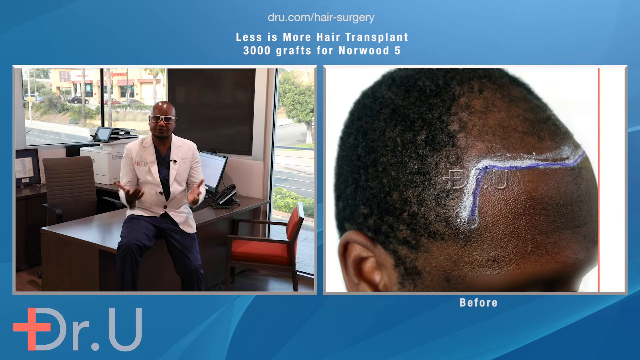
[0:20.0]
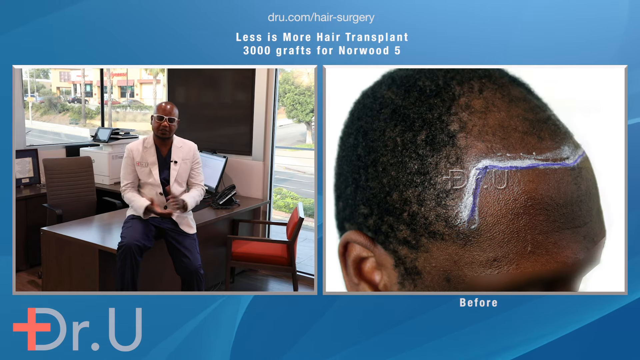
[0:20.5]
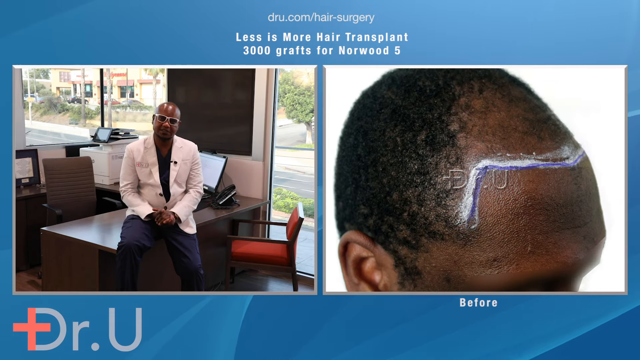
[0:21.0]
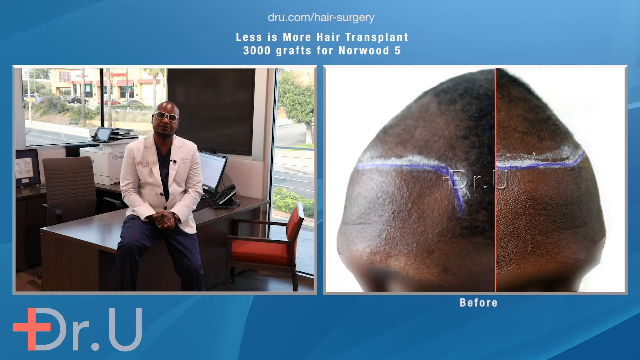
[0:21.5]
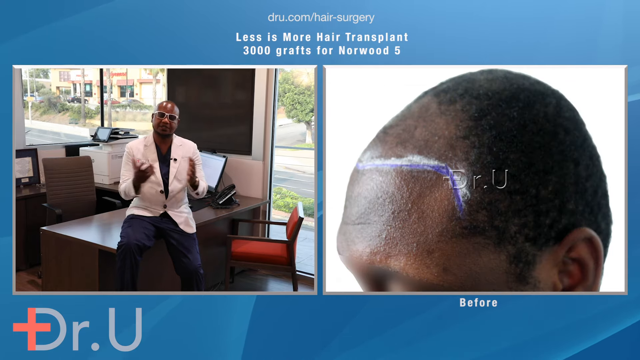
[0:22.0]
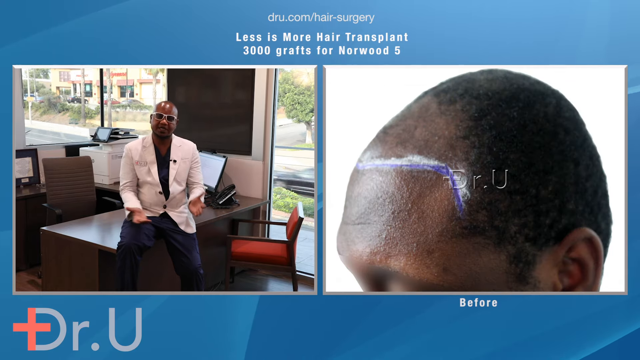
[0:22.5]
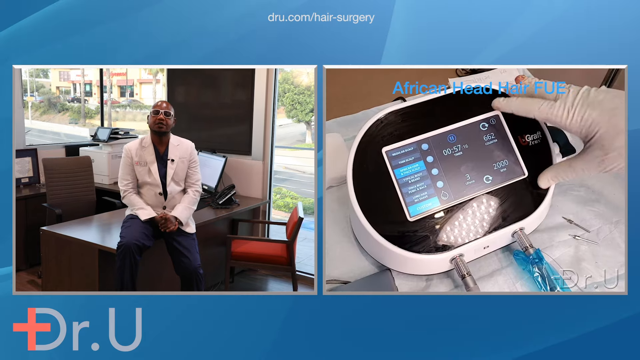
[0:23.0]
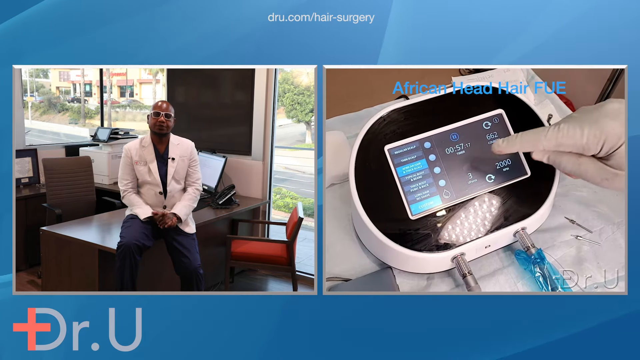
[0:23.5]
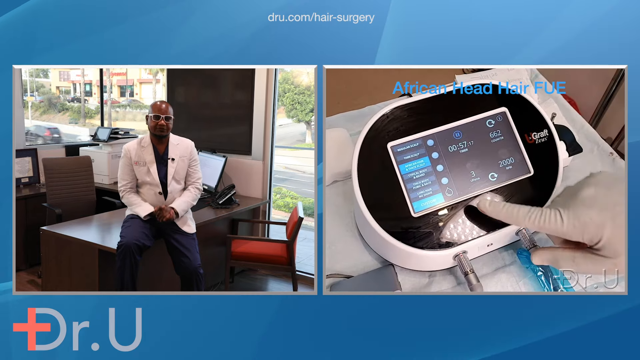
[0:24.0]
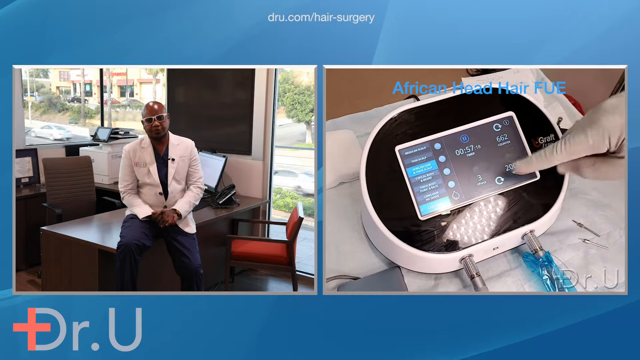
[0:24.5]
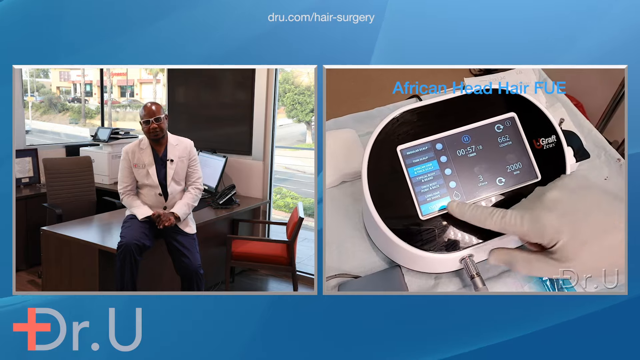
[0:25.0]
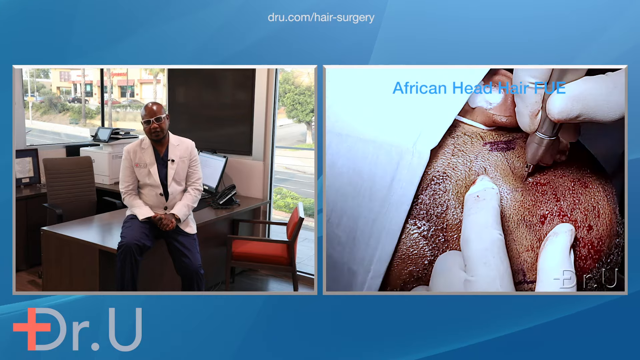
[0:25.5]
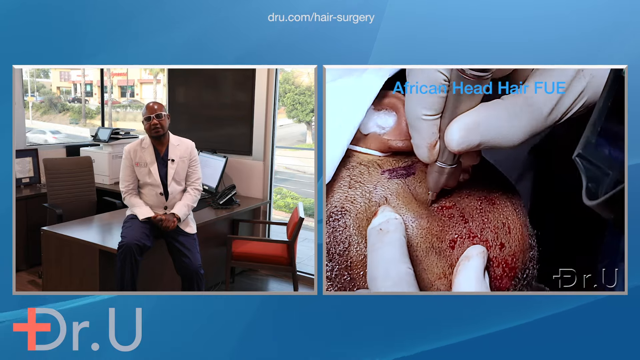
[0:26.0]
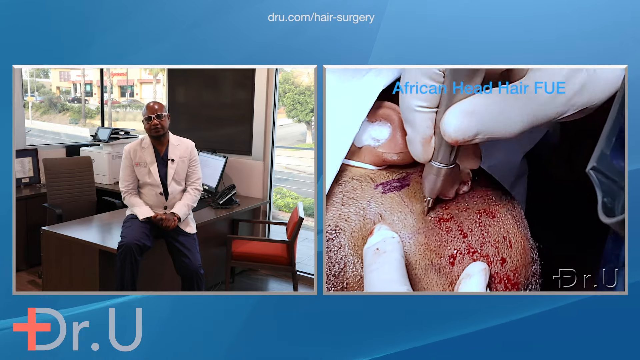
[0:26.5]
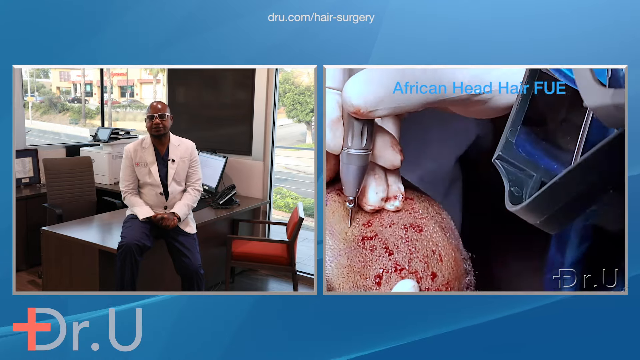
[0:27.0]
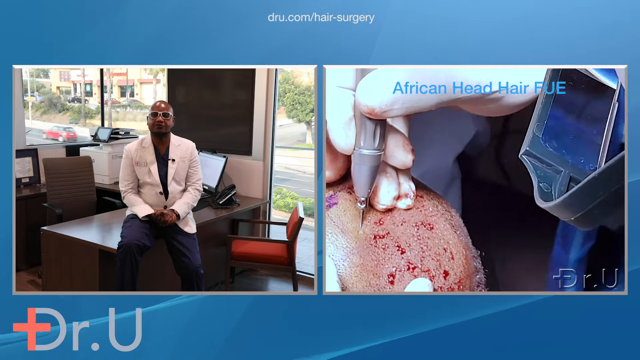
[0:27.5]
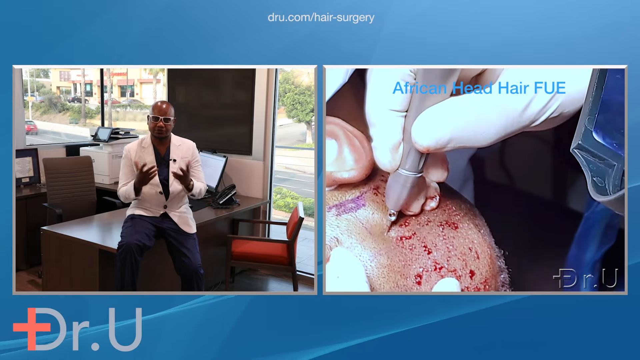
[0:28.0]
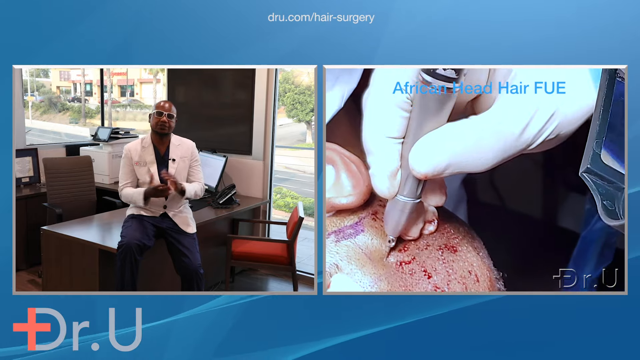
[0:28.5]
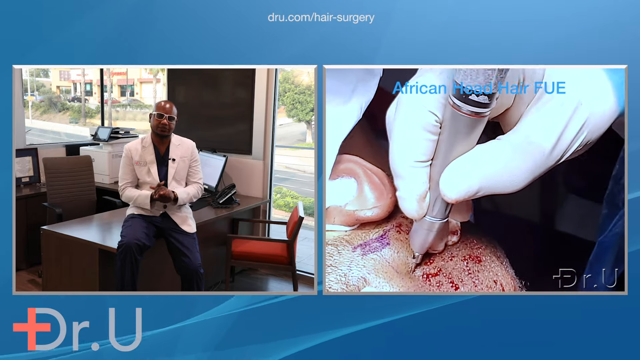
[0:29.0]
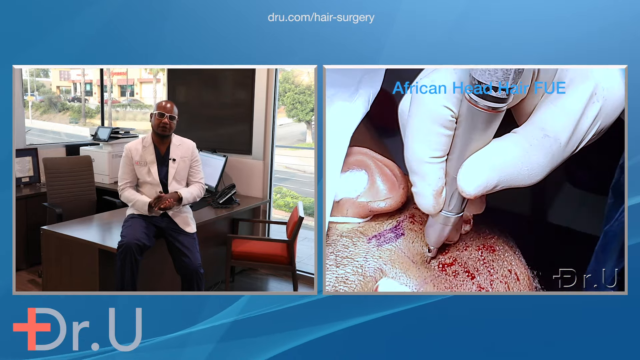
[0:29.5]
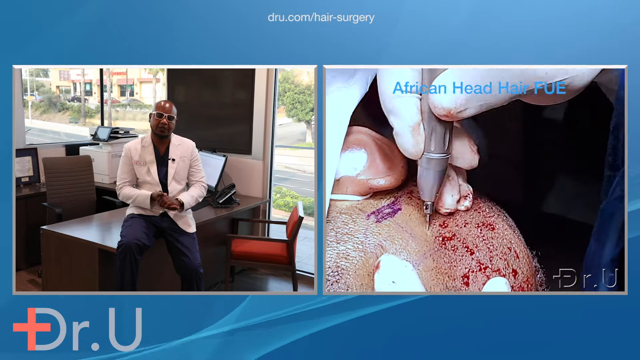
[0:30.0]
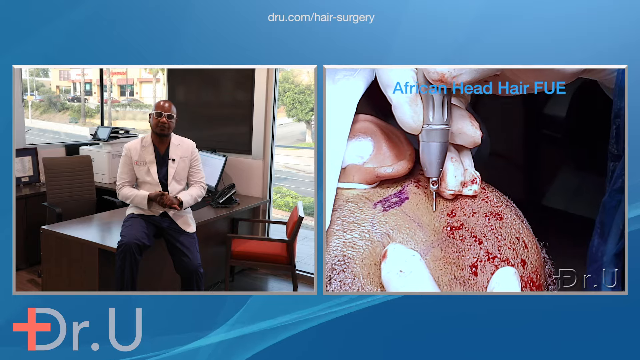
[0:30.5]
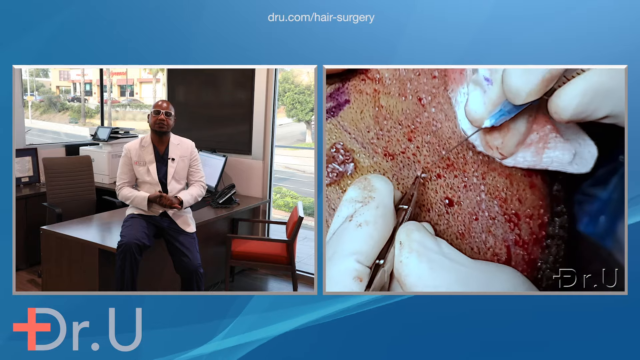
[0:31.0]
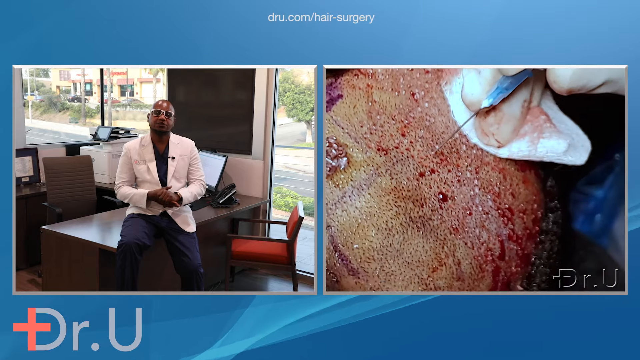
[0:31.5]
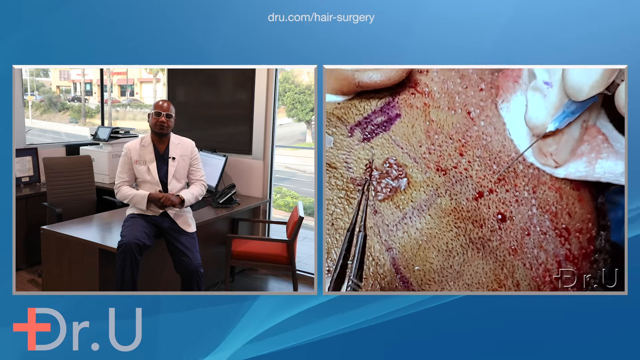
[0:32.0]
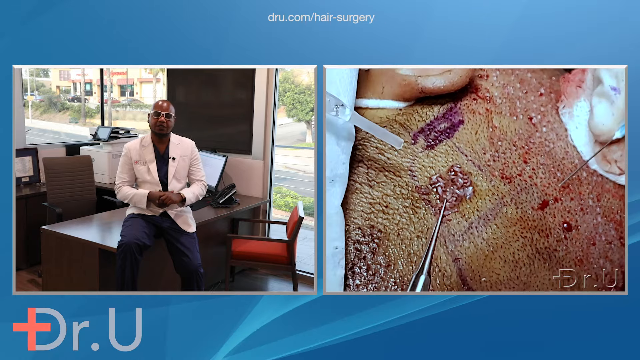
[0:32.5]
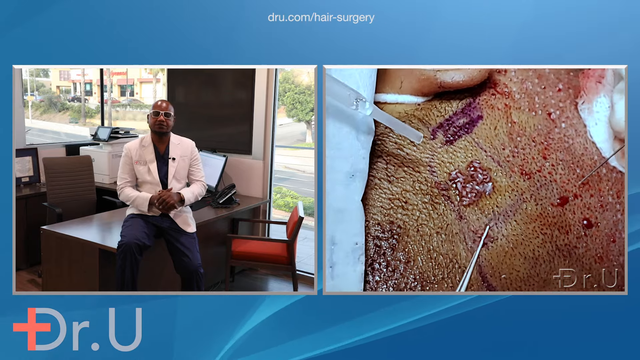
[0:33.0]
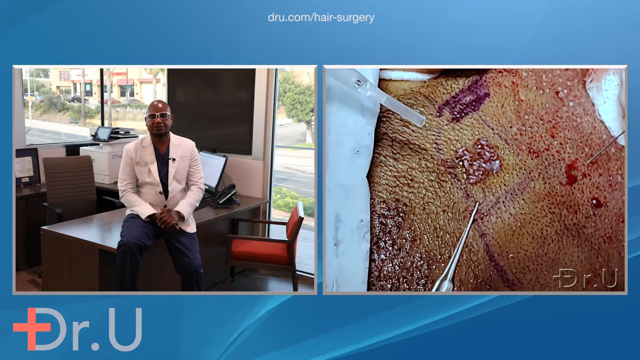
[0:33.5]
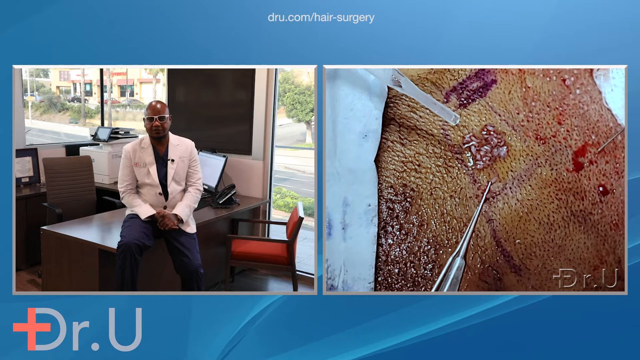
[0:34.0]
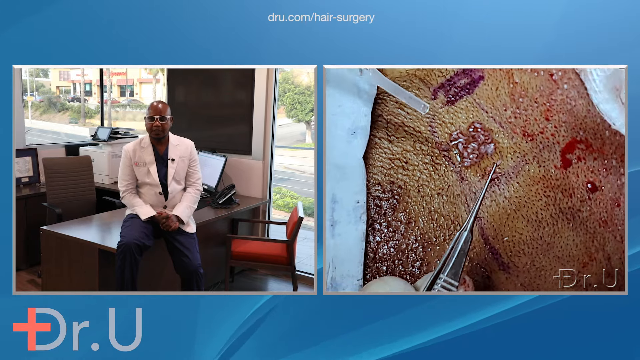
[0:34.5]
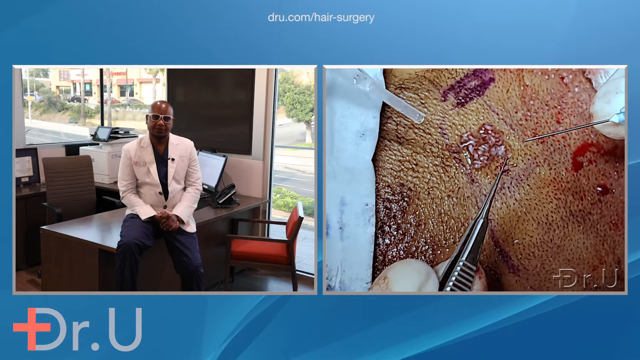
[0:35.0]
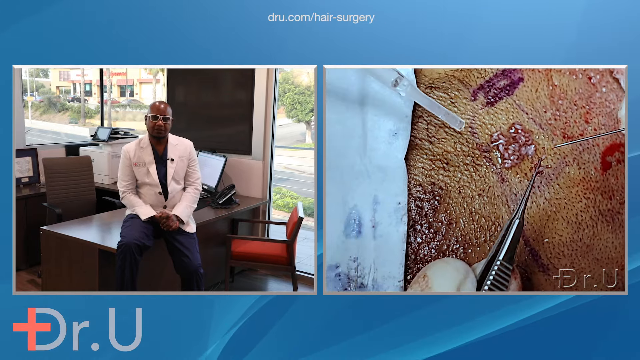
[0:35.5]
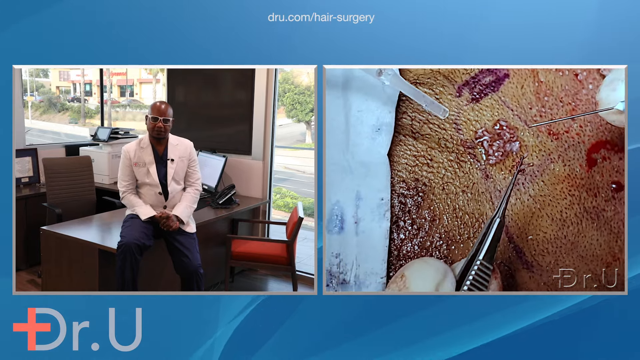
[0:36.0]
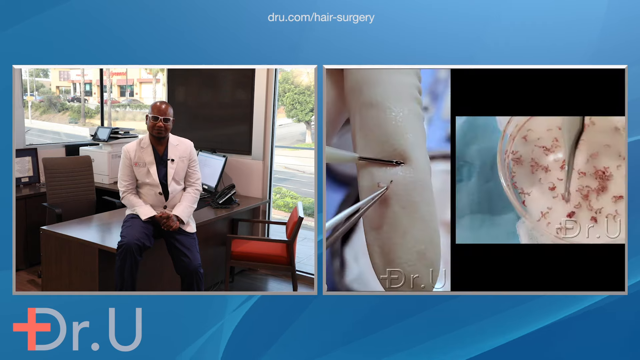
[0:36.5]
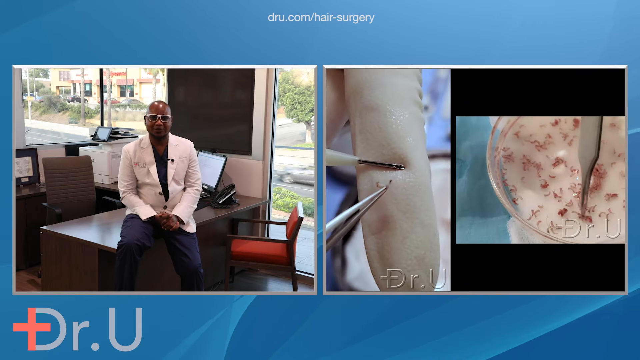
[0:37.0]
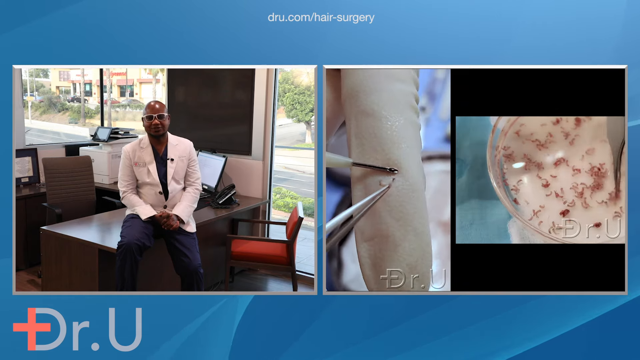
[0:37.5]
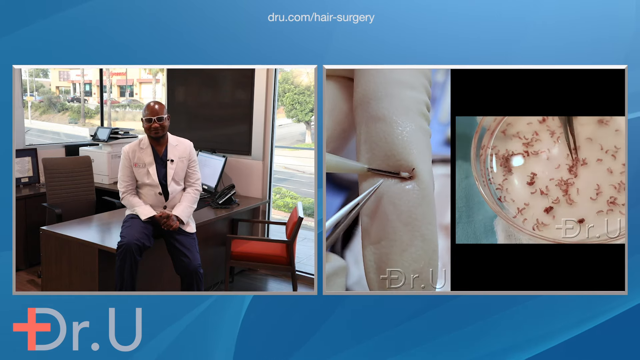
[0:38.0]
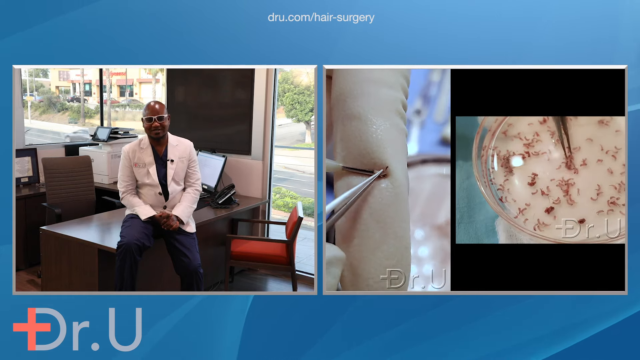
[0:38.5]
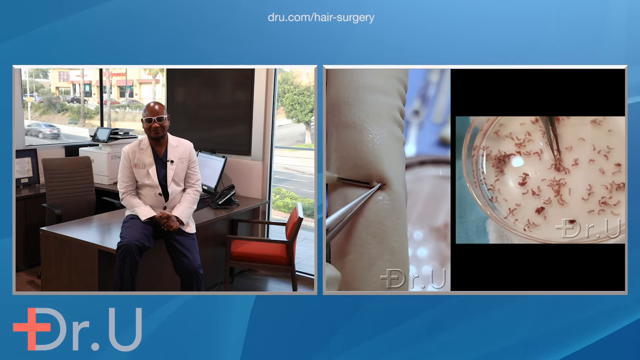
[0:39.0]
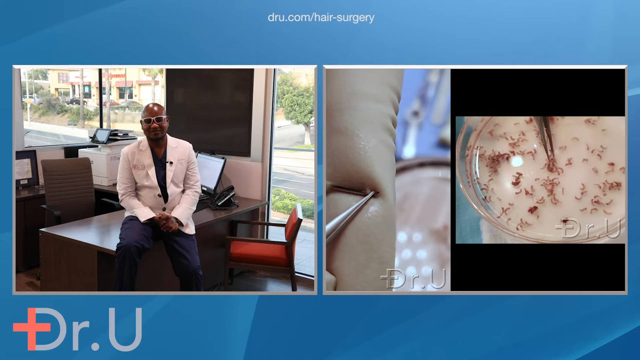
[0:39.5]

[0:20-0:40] A split screen shows two inset videos. Text above them reads "dru.com/hair-surgery" and then "Less is More Hair Transplant 3000 grafts for Norwood 5." On the left, a man who appears to be a doctor wears a white jacket and sits on the corner of a wooden desk facing the camera. Behind him are a computer screen and a printer, with windows on both sides of the desk; beyond them, buildings are visible and cars pass on a street. He speaks to the camera. On the right, a hair transplant is being performed: a video shows someone's scalp while someone wearing white gloves uses an instrument to puncture it, and little marks of blood are all over the scalp. Several images of this appear. There is also a petri dish with tiny particles in it that look like small hairs, and a photograph of a man's scalp with a white line drawn on it where his hairline should be.